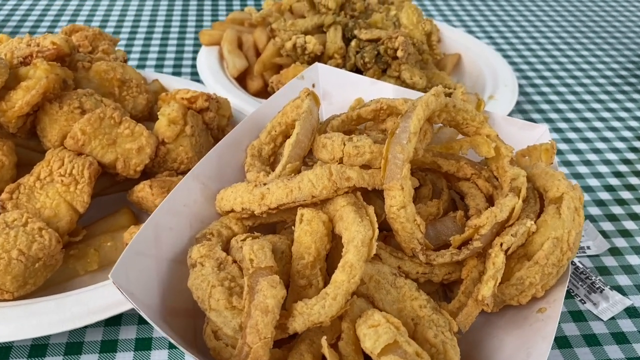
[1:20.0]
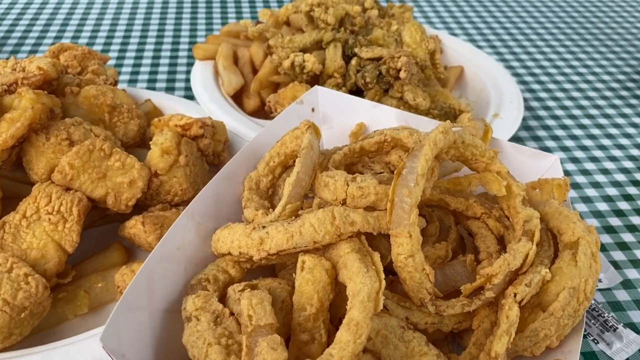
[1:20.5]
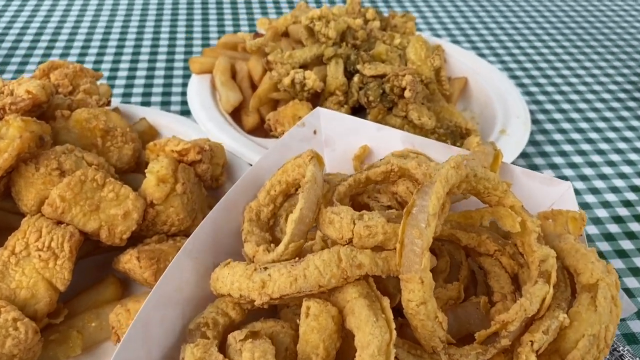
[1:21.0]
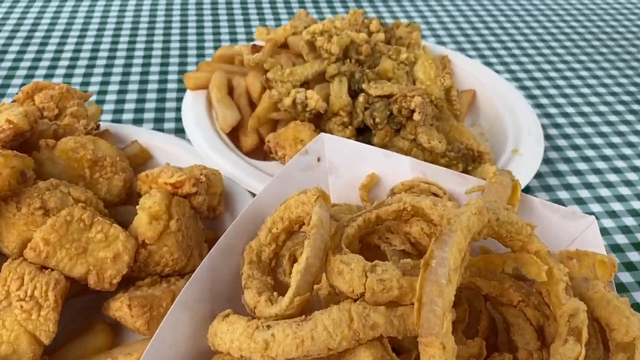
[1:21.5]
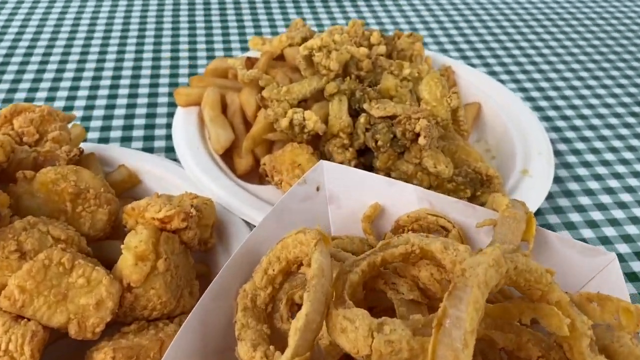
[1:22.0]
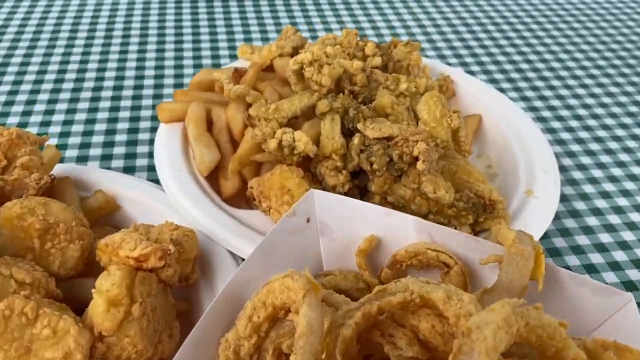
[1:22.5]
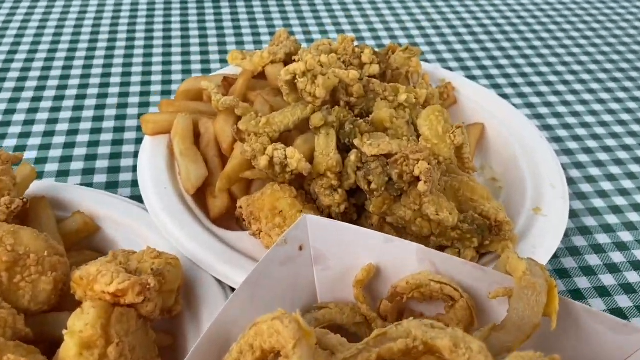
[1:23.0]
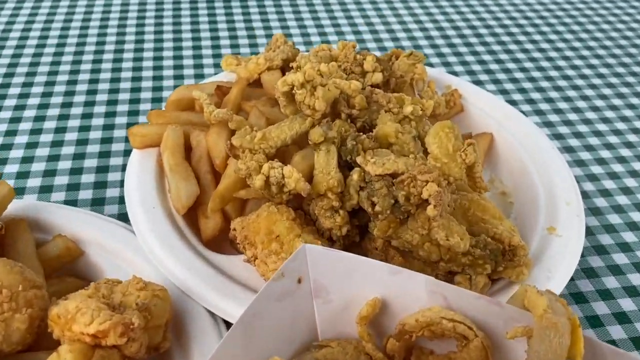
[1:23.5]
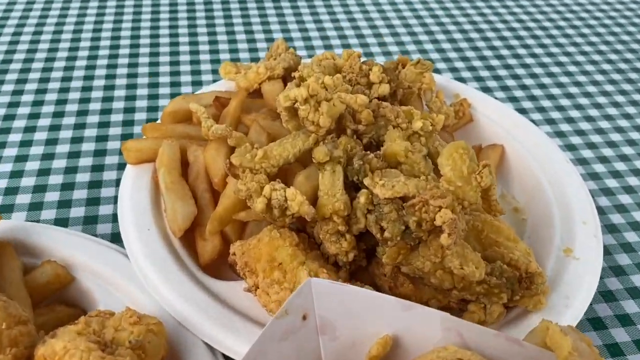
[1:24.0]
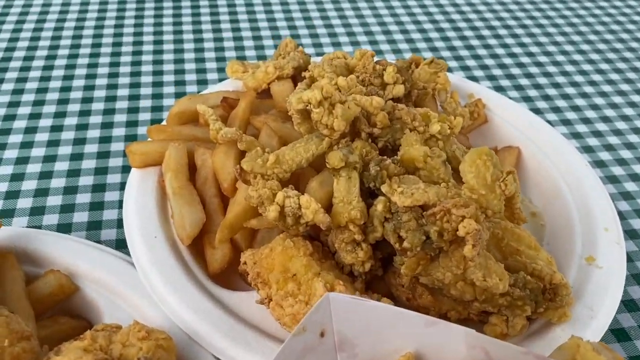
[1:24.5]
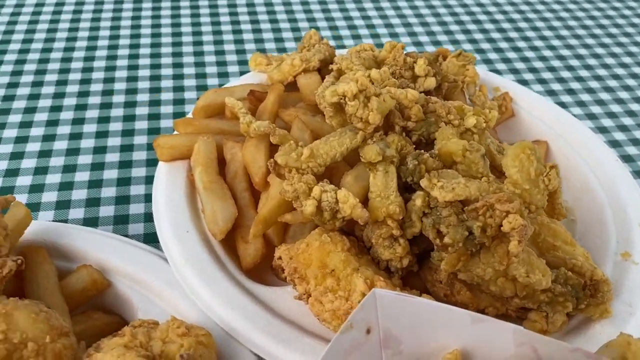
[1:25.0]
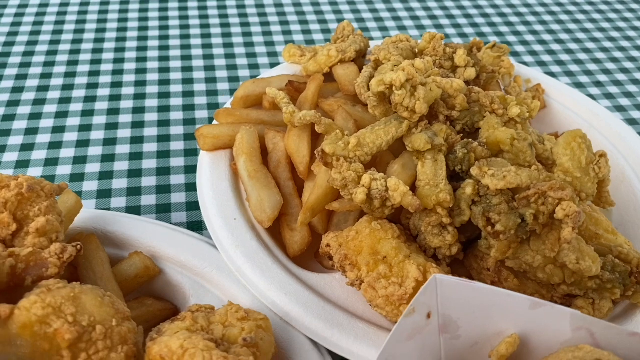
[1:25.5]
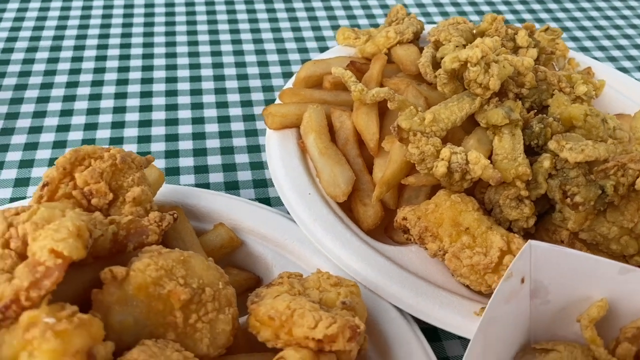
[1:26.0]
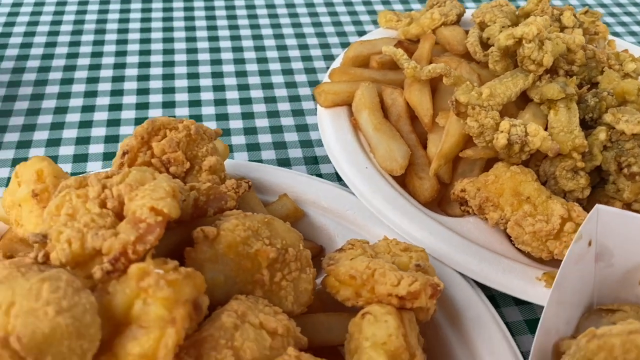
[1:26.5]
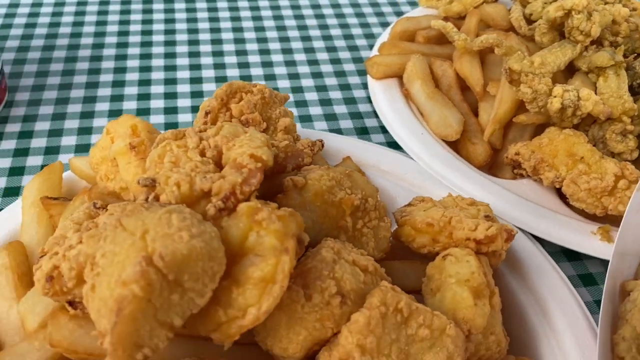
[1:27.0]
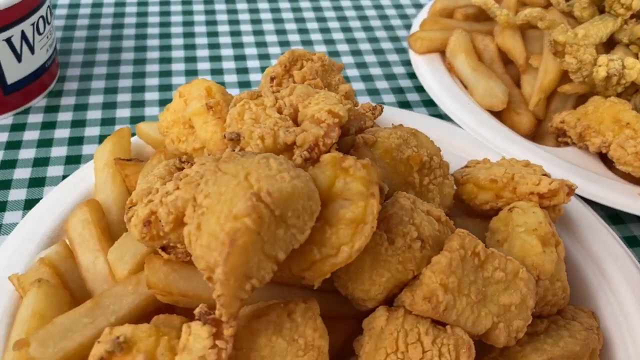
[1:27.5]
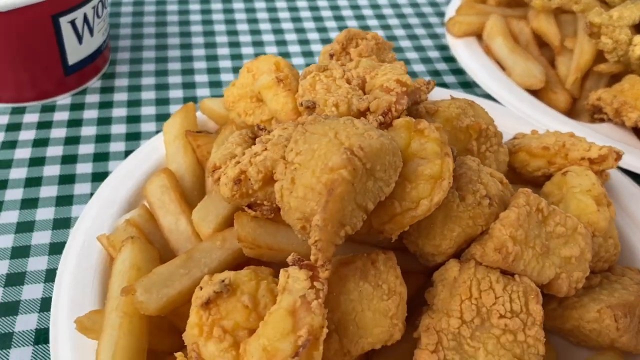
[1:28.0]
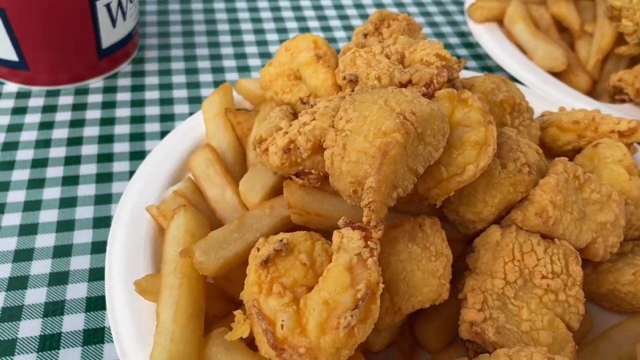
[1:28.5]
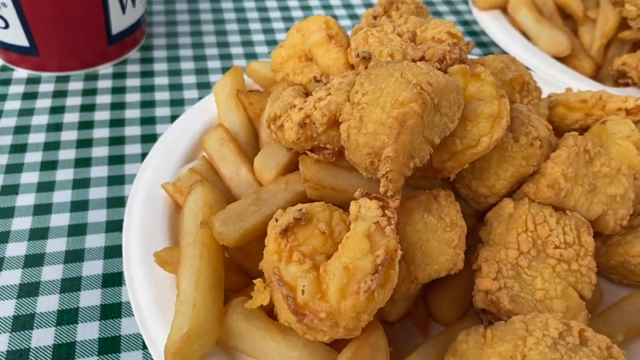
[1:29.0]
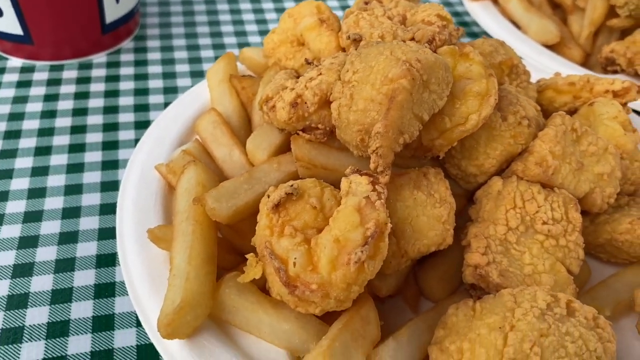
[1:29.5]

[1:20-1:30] Three plates of food are on a green gingham tablecloth. Directly in front is a bowl of onion rings, to the left side of the screen is something else deep-fried, and at the back is a plate of chips and something deep-fried. The camera zooms over the top of them and pans to each plate; each dish looks to be a plastic plate. A side dish and a paper cup are visible in the top left of the picture in some shots. The chips are medium-sized and deep-fried to a golden colour.